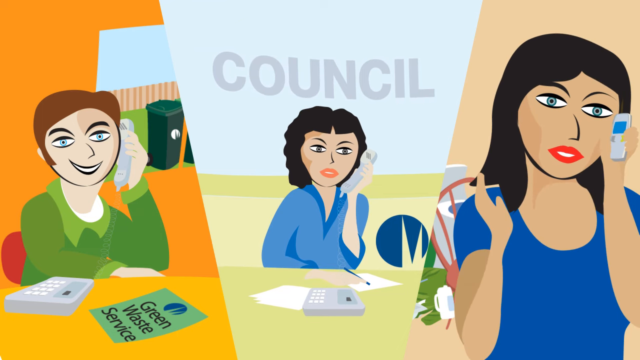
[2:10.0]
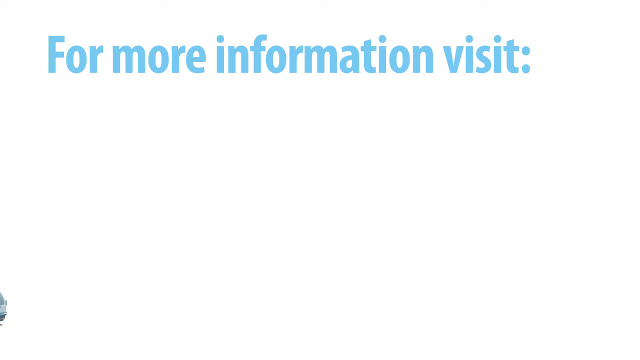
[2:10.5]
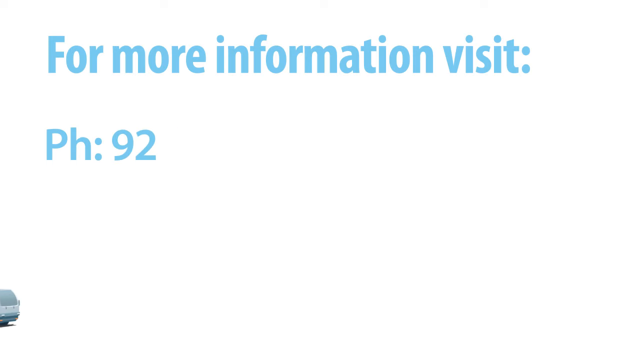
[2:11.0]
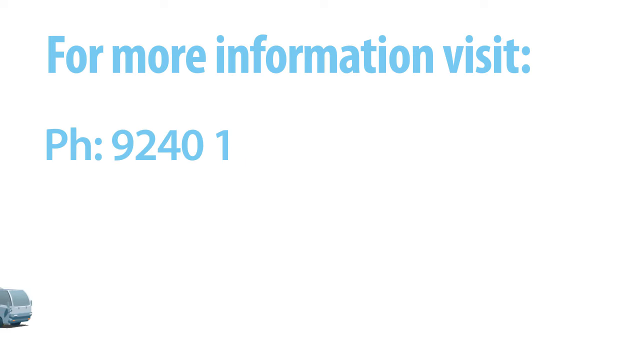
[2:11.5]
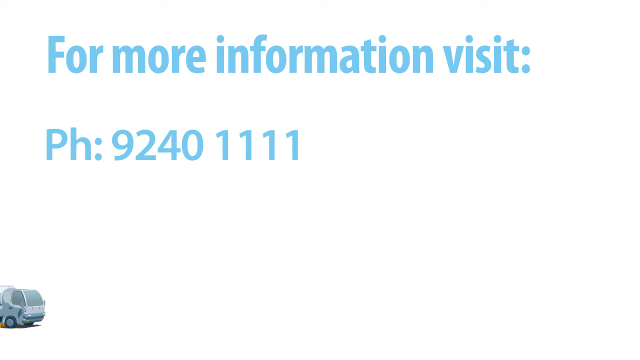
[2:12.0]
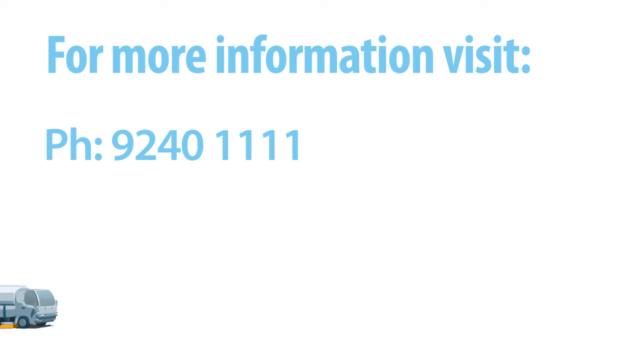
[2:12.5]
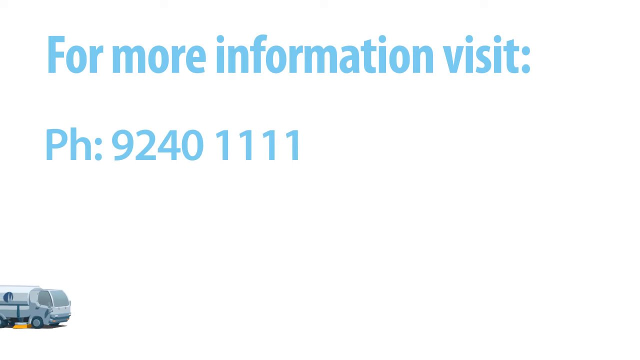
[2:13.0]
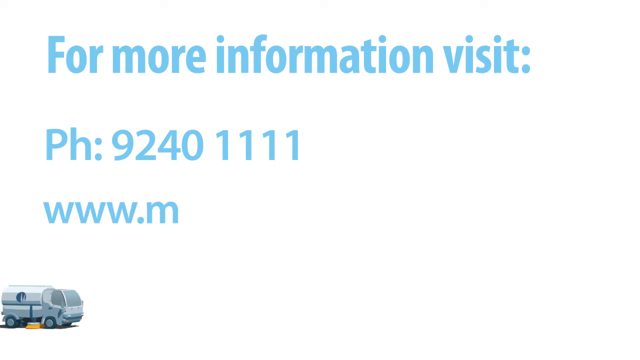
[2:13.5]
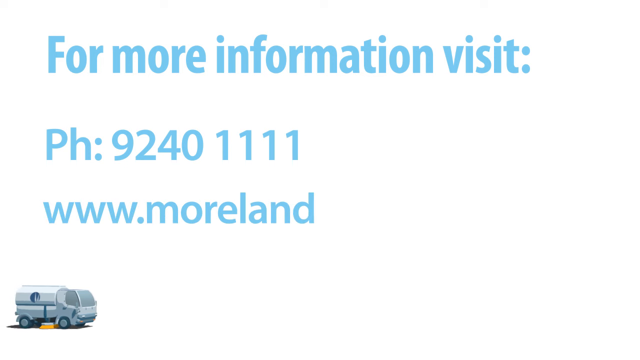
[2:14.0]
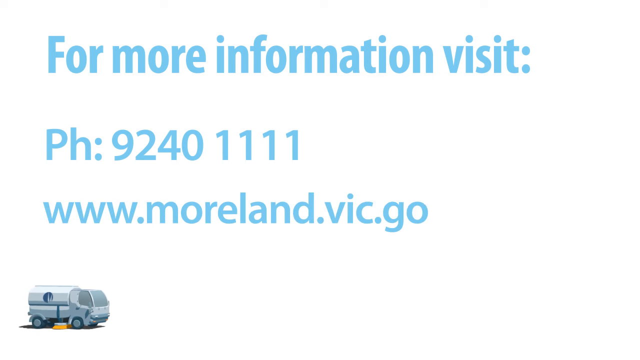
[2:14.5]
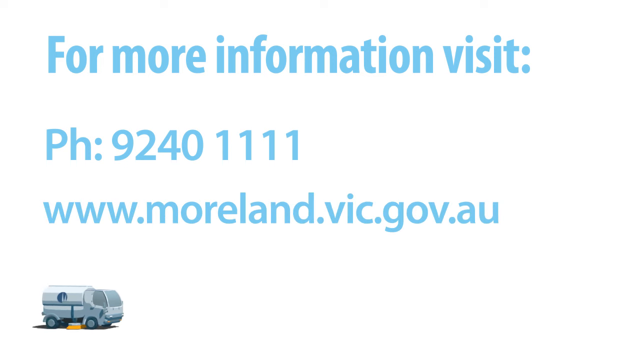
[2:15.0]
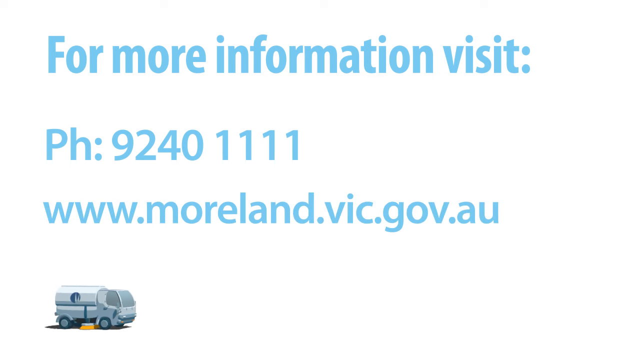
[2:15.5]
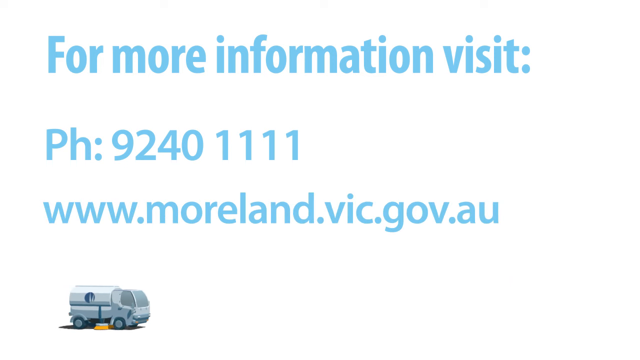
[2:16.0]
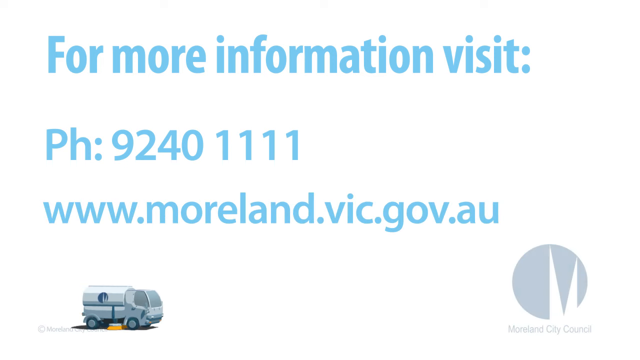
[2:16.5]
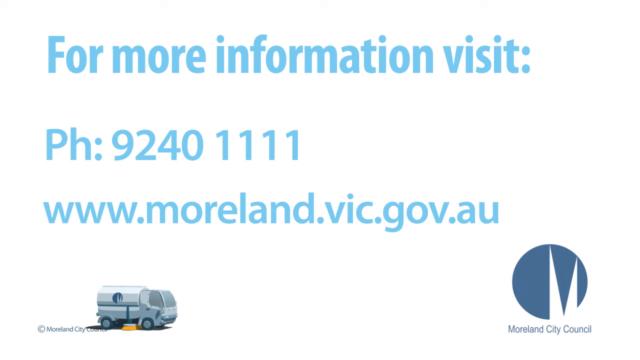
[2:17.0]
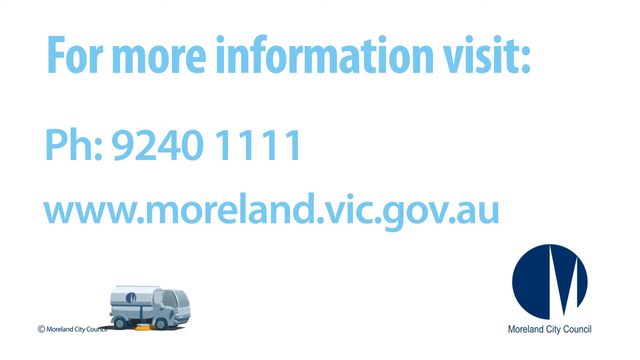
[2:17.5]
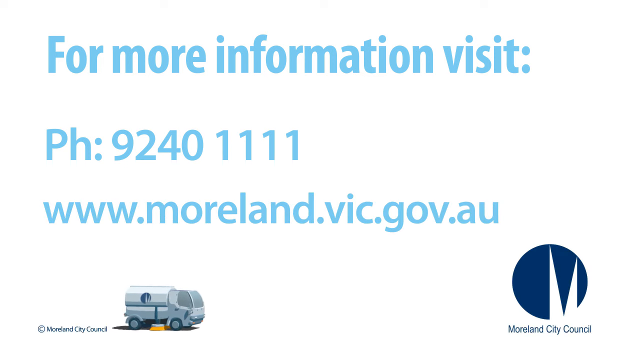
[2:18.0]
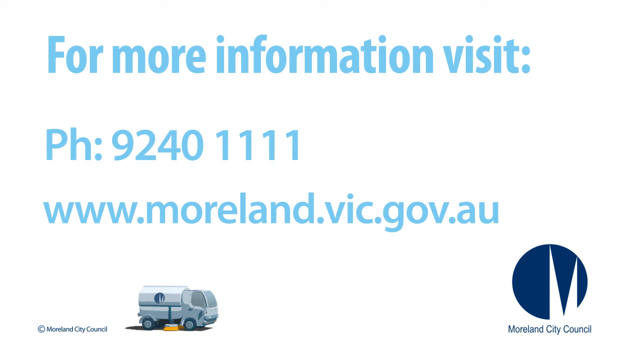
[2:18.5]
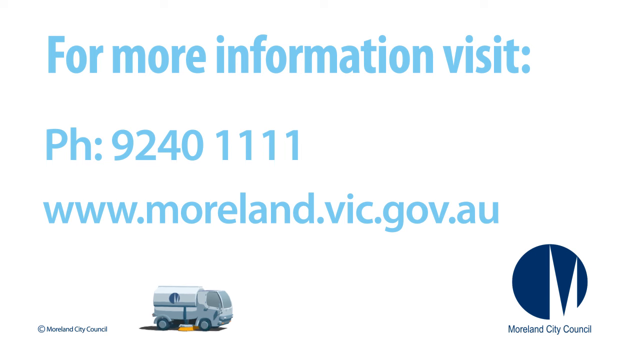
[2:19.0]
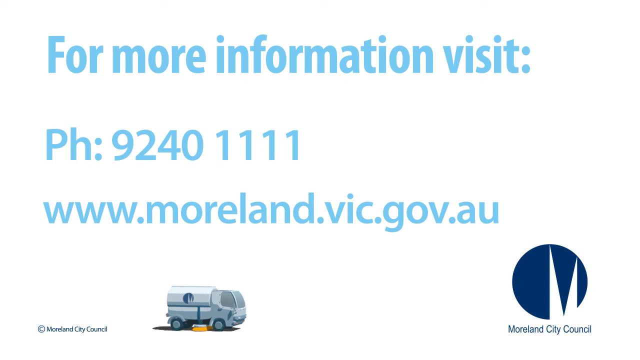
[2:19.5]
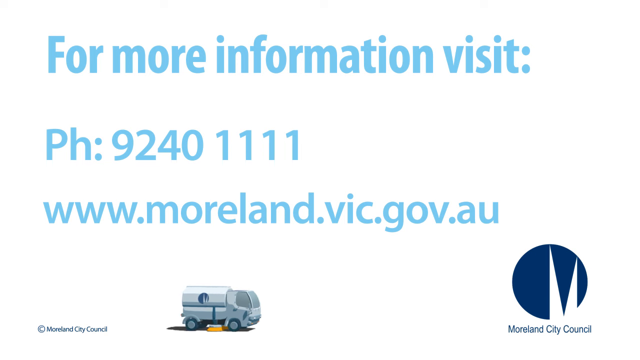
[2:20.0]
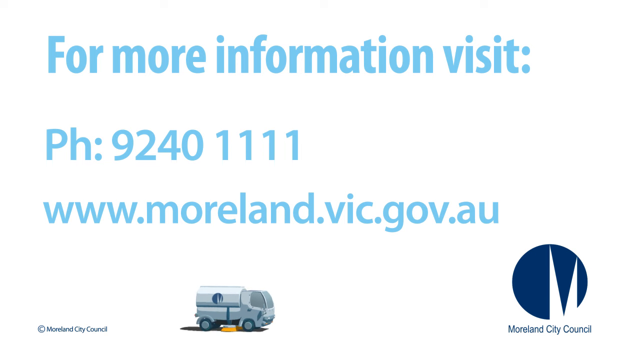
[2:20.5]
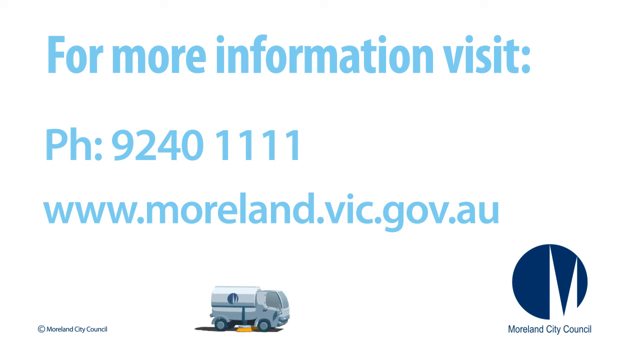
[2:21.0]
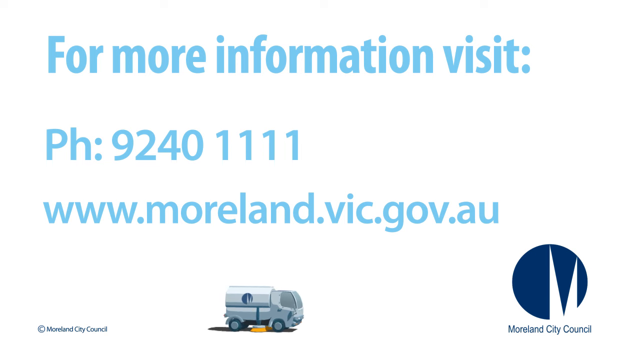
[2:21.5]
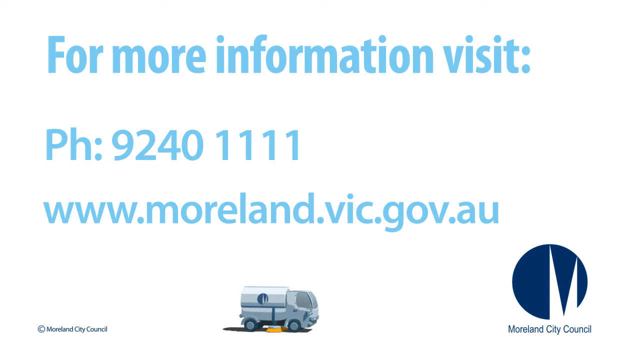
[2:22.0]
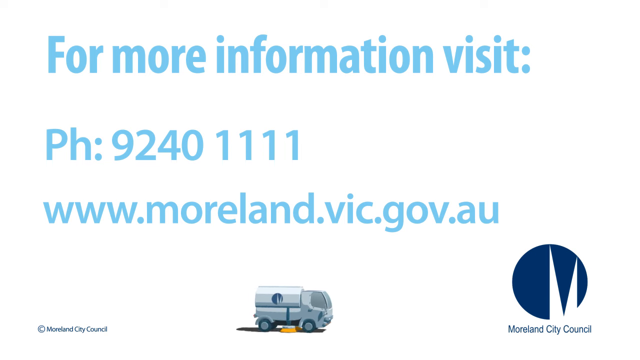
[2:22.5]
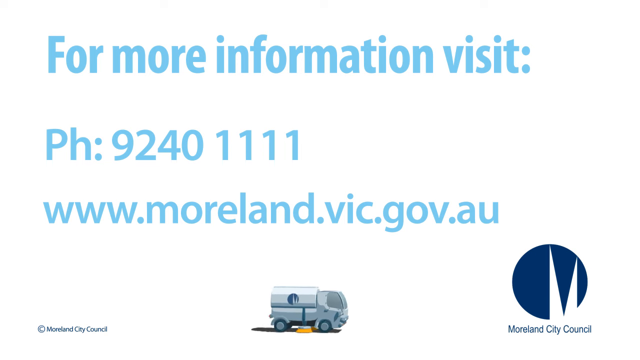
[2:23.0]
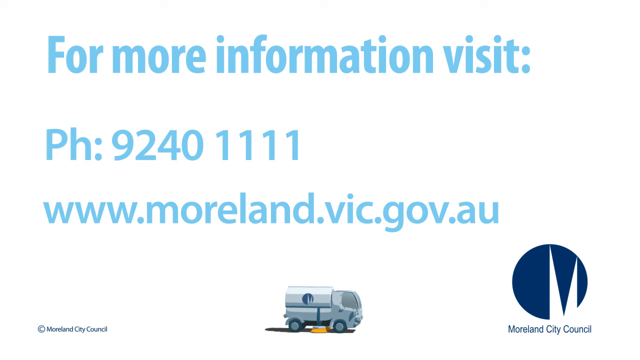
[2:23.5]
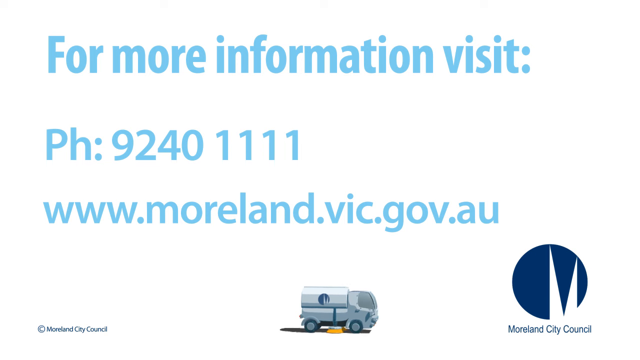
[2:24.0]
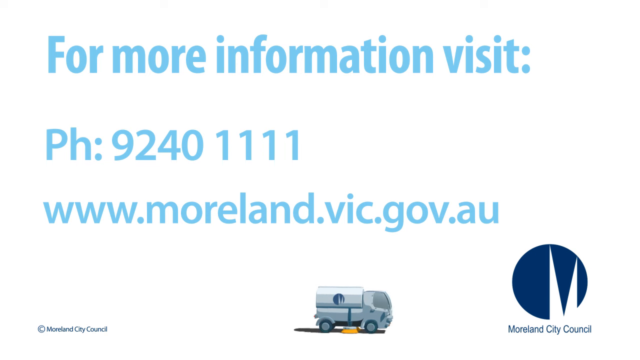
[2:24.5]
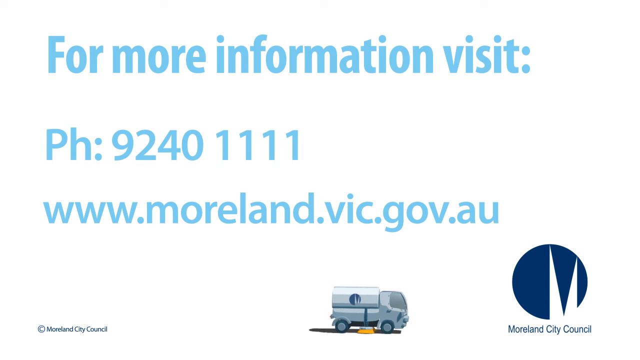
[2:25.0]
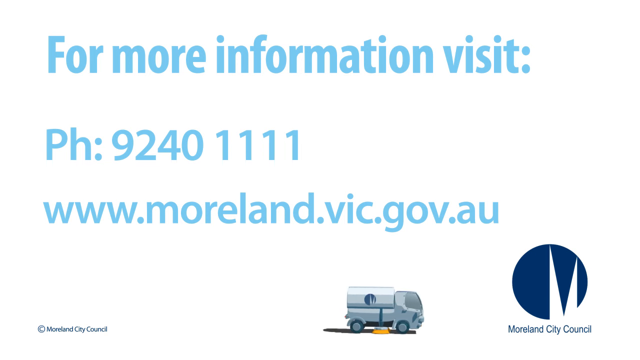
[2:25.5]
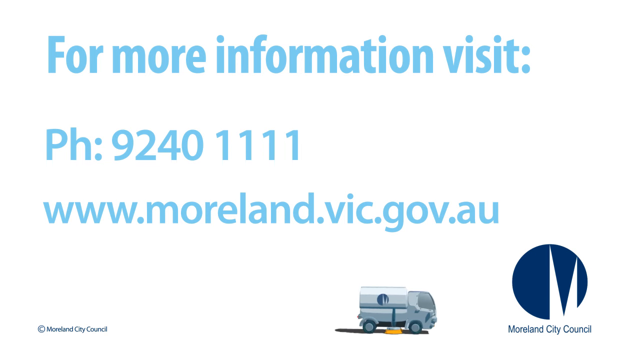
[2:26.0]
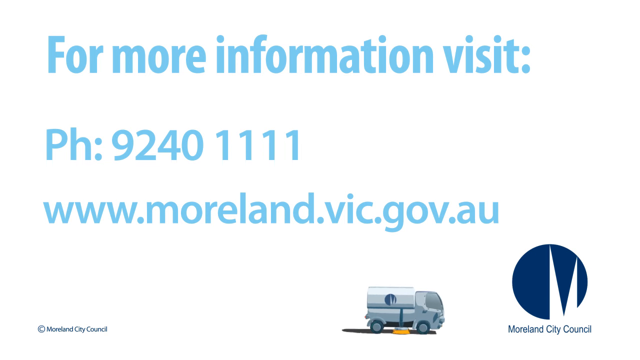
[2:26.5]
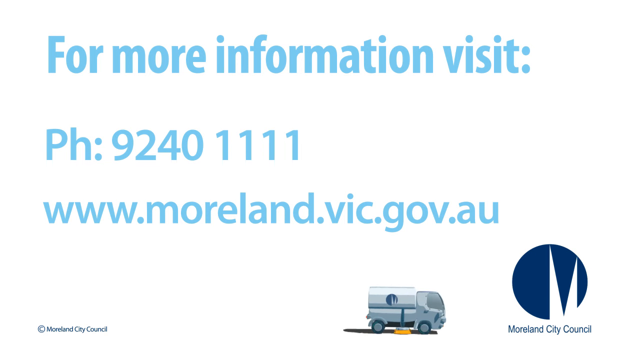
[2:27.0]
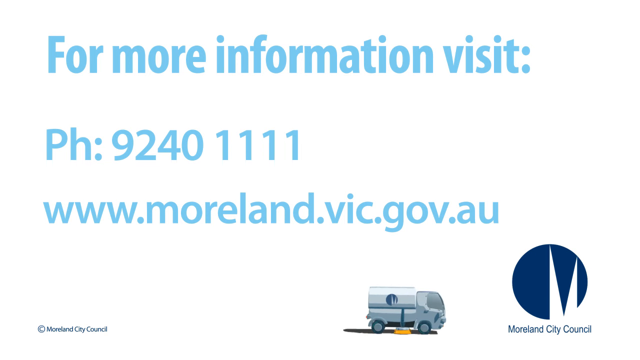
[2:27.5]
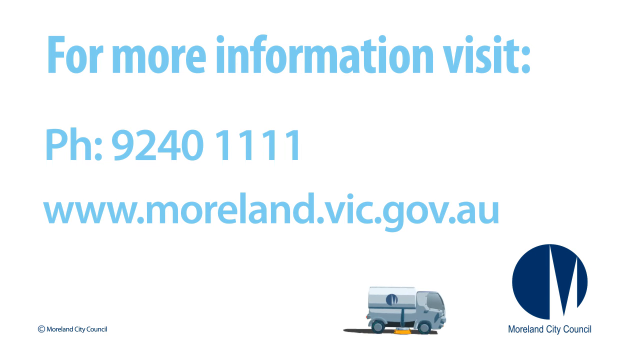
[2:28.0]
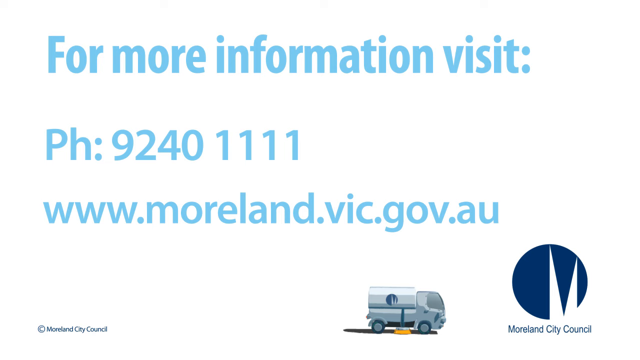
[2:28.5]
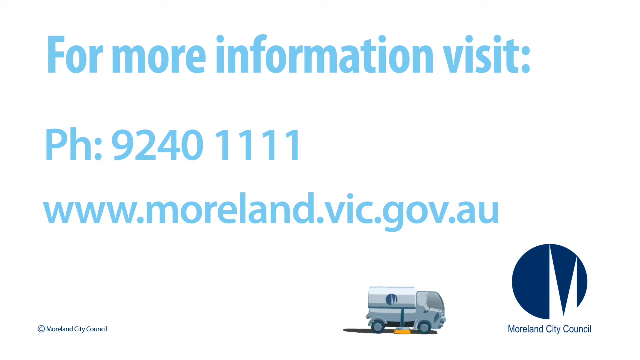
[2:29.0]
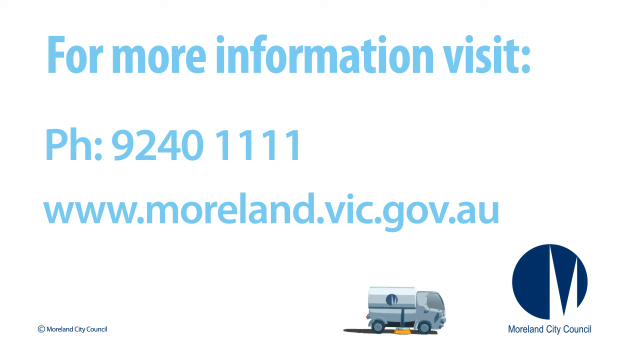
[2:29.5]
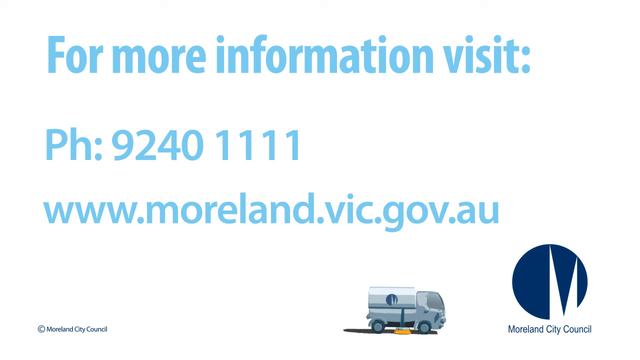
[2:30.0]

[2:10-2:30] The image is split into three panels. On the left, a person in a green shirt is making a call, apparently from home; he has a flyer that says "green waste," and green bins are visible behind him. The woman in the middle, wearing a blue shirt, appears to be in an office working for the City Council. The person on the right also appears to be at home, wearing a blue shirt, and is also on a phone call. Then a prompt reads "for more information visit" with the phone number 9240 1111 and "www.moreland.vic.gov.au." At the bottom is a small Moreland City Council logo, and a small waste truck drives toward the sign. The sign's background is all white.